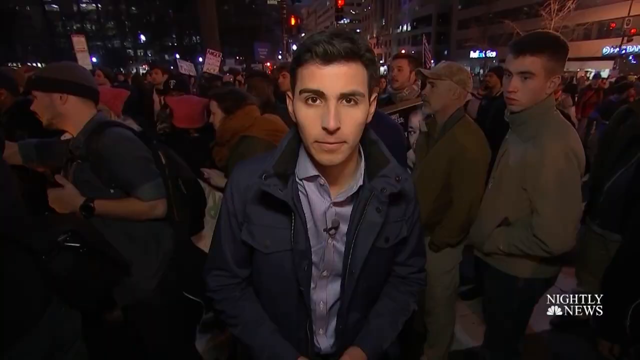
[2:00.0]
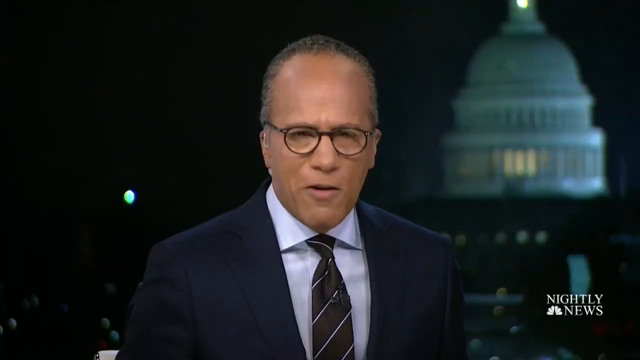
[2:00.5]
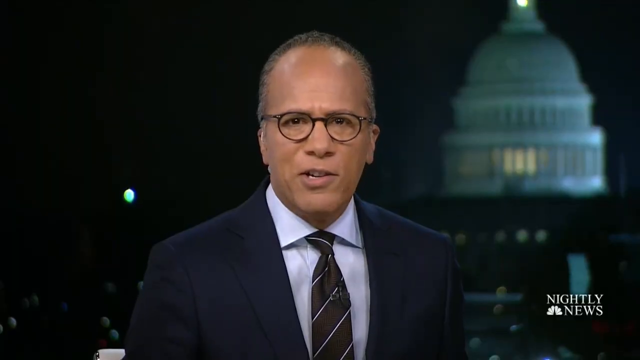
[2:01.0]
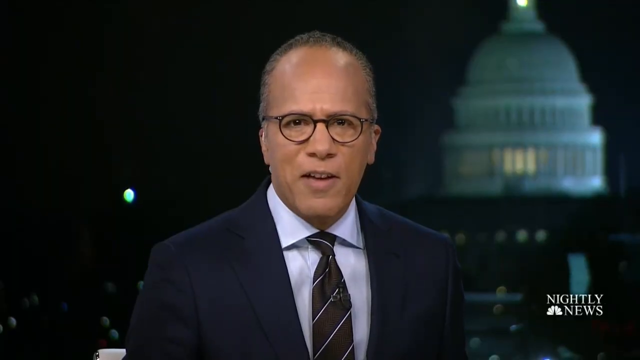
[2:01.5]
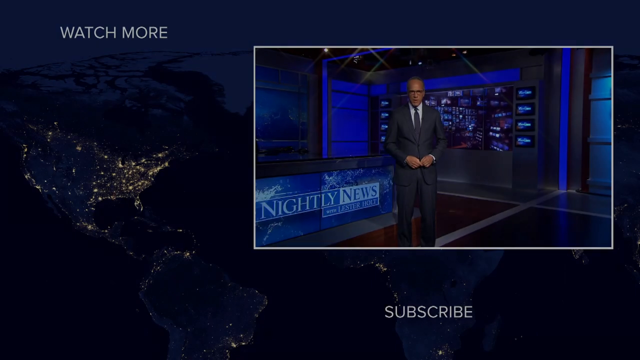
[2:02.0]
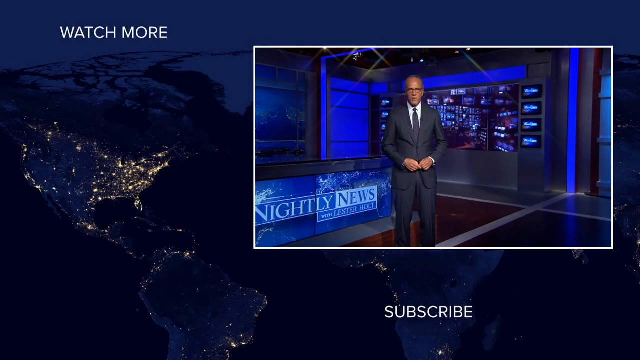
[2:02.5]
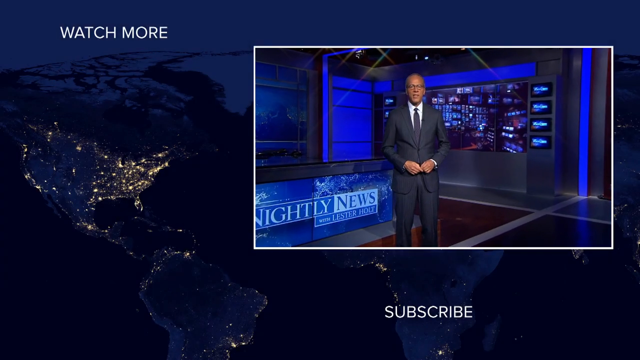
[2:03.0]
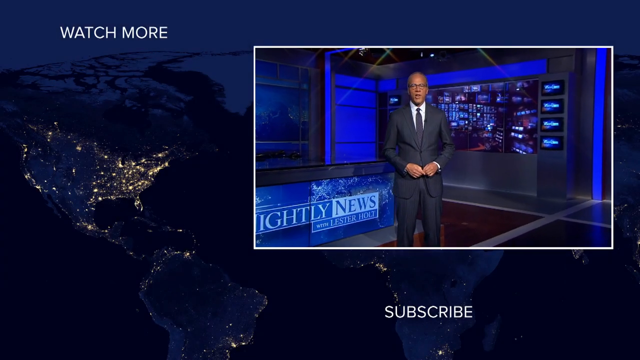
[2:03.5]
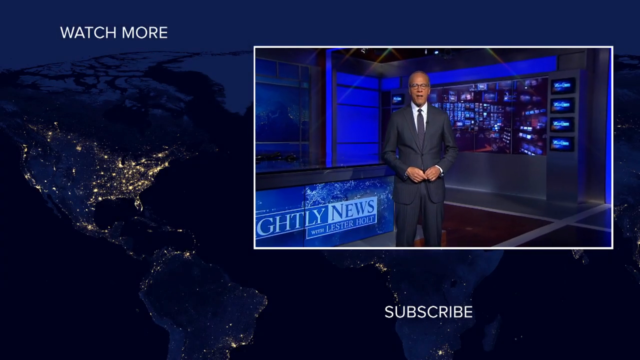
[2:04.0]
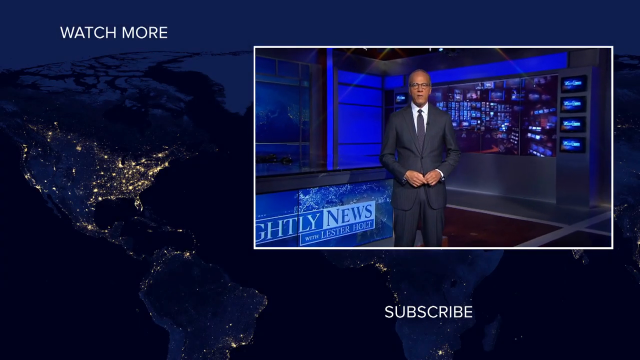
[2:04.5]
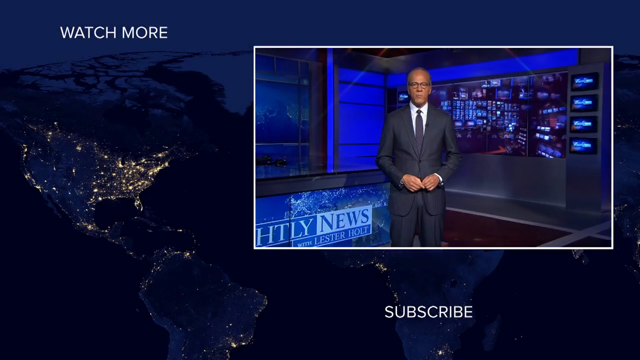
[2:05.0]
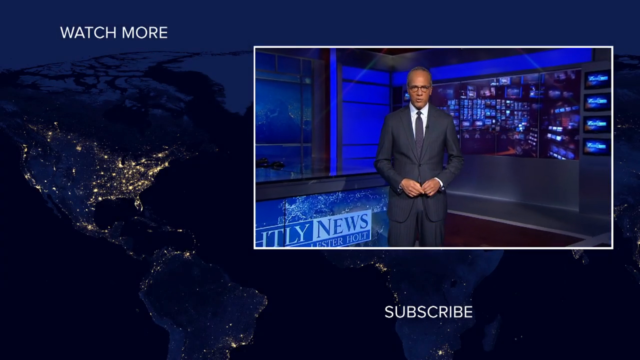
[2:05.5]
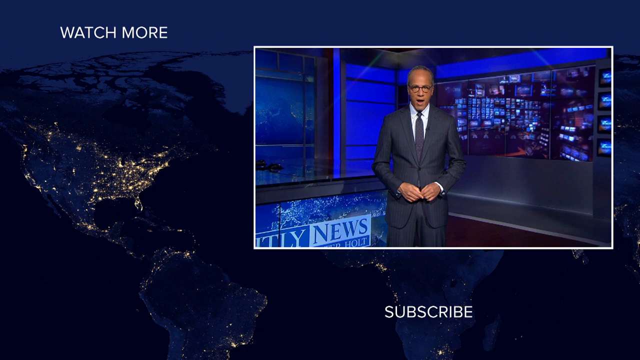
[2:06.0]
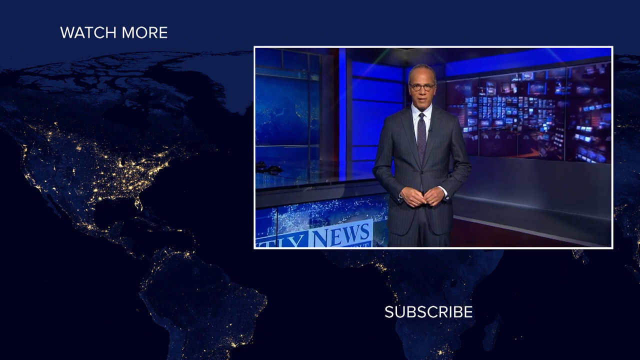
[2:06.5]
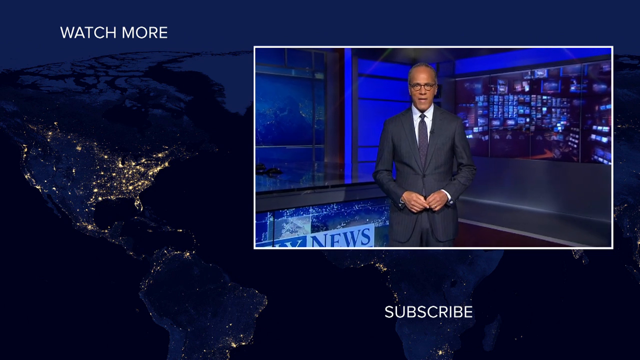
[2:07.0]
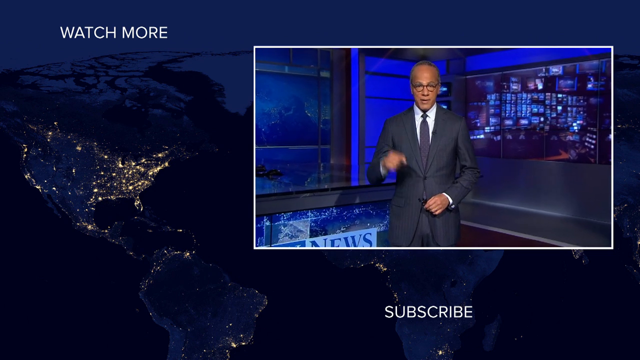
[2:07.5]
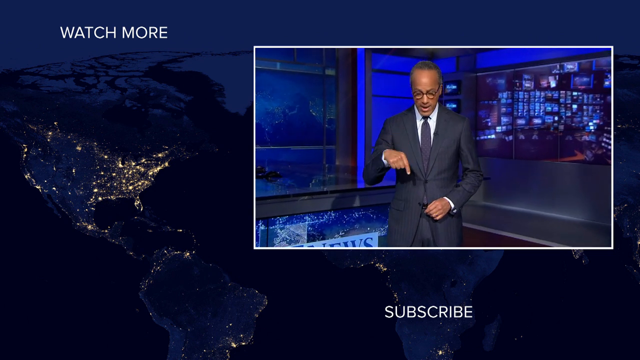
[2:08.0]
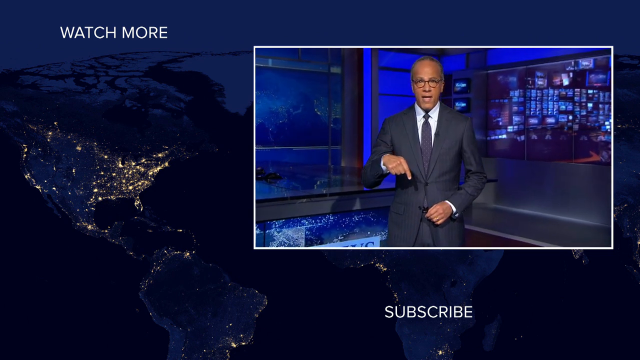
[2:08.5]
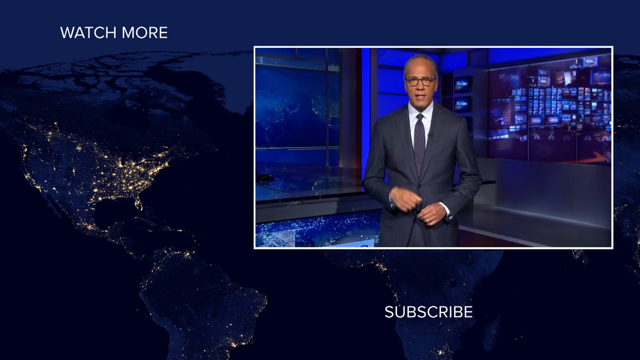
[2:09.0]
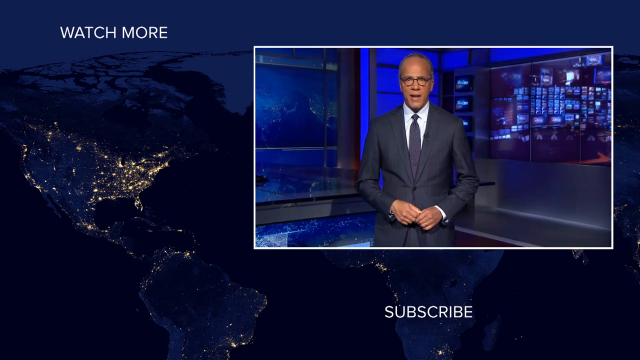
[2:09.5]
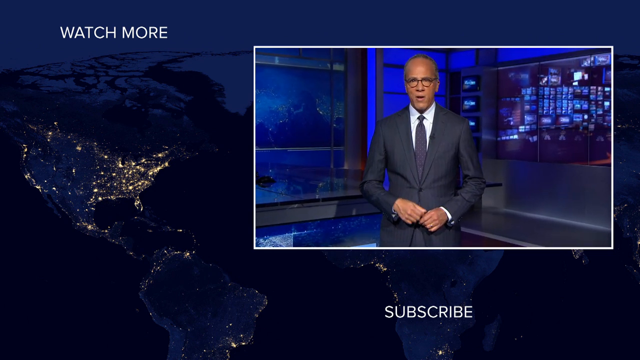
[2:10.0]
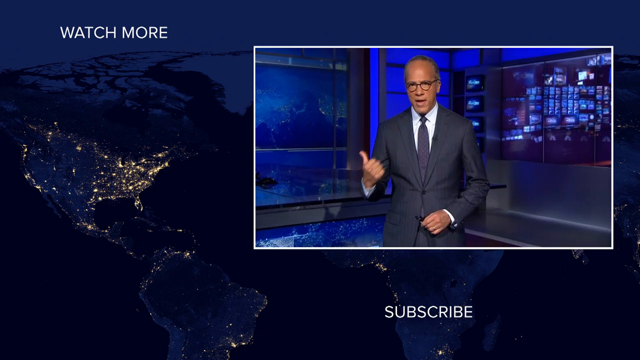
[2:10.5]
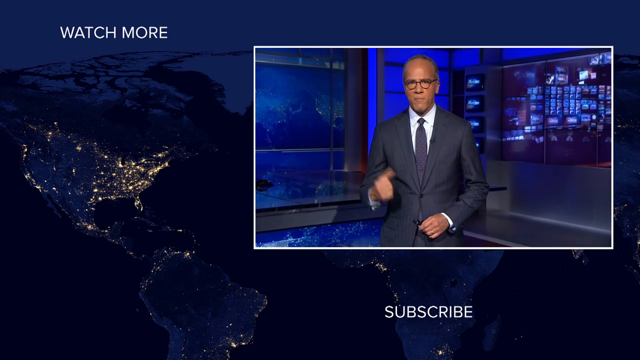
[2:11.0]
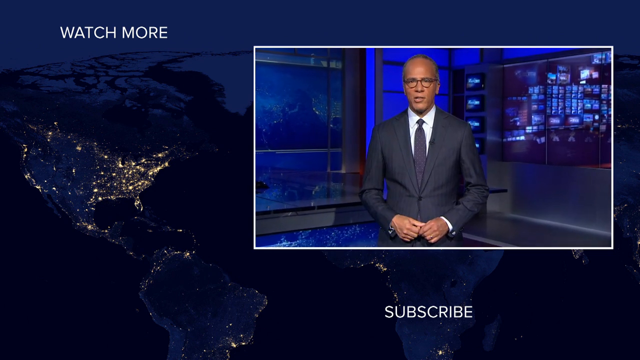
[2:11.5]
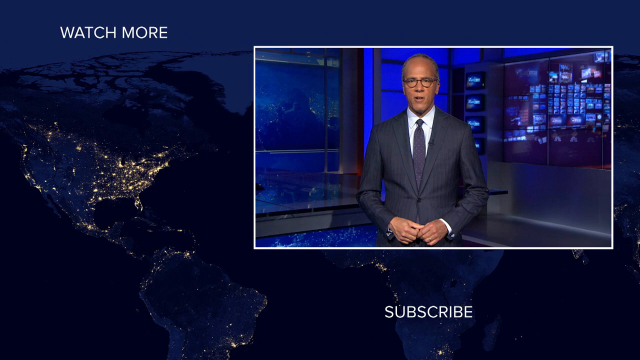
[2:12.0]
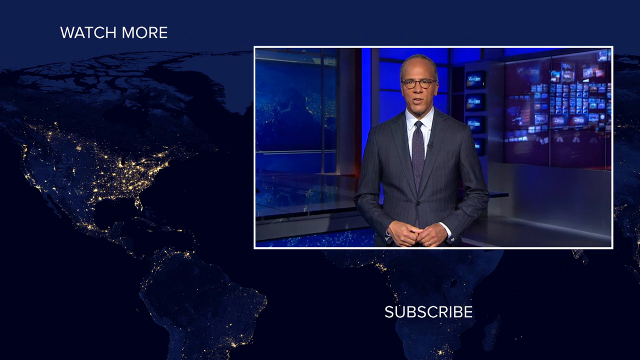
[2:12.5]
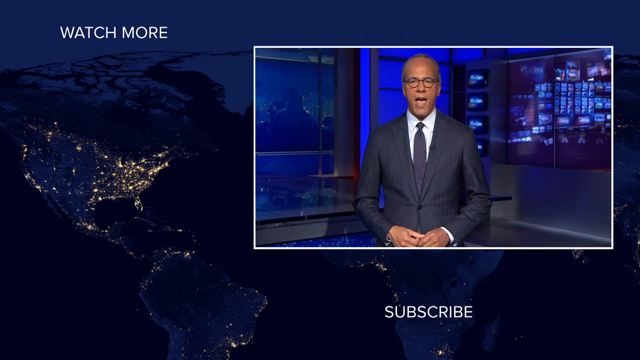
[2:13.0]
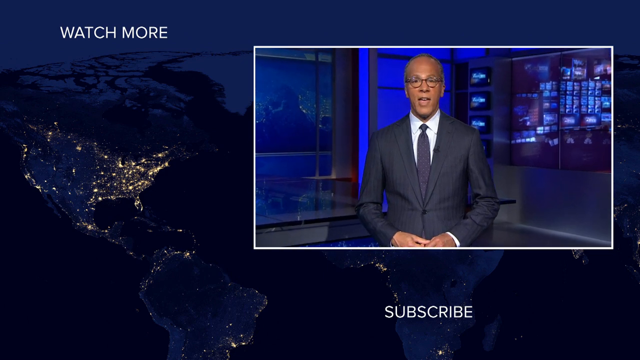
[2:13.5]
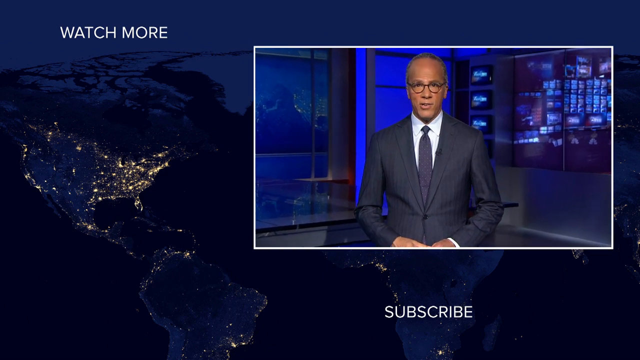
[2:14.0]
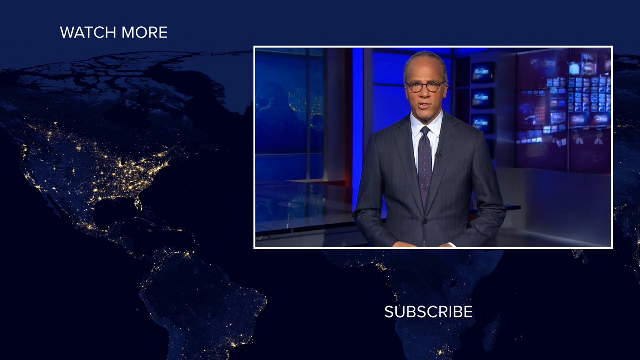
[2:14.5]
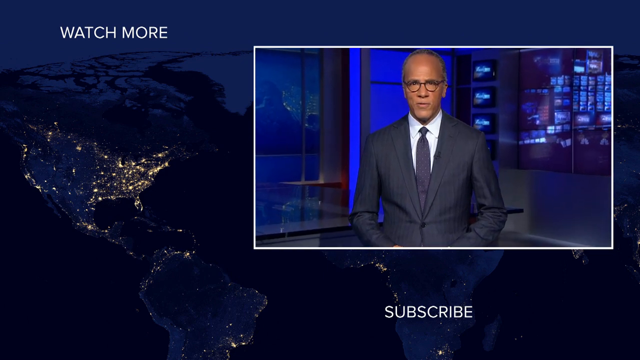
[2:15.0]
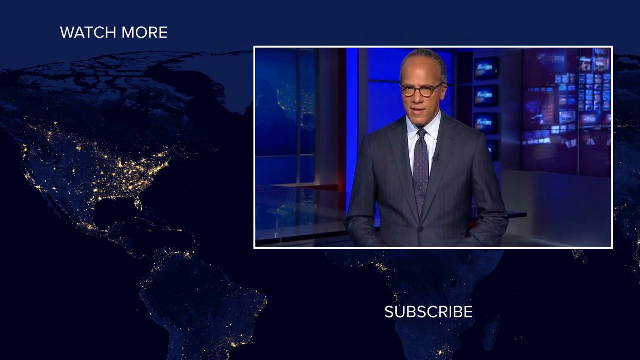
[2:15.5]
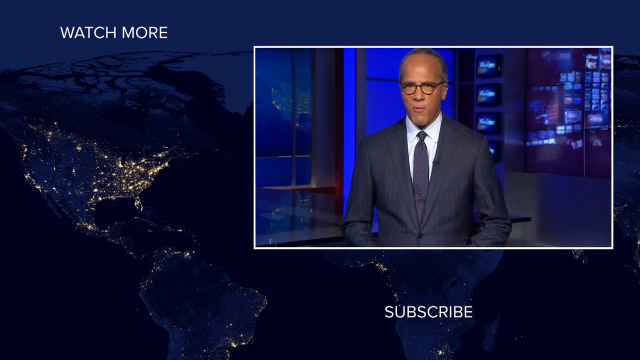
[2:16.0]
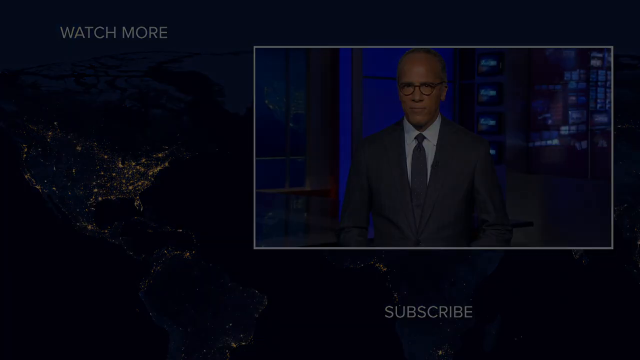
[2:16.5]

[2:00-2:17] The broadcast returns to the studio, where a man in a dark blue suit, a dark blue tie and eyeglasses stands in front of a desk with a screen reading "NBC News," on a corporate news set with an overall blue color theme. Below the video is the NBC News logo with "subscribe" underneath it. To the left are two more squares linking to other NBC News videos: one reads "NASA astronauts splashdown after nine," and the other opens a playlist of NBC News videos.